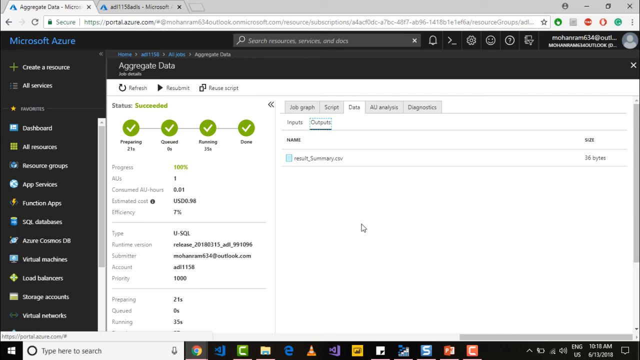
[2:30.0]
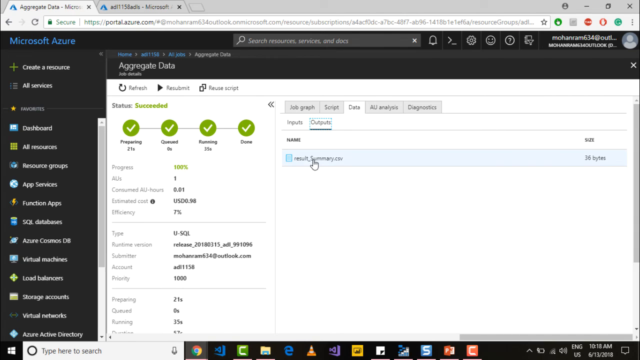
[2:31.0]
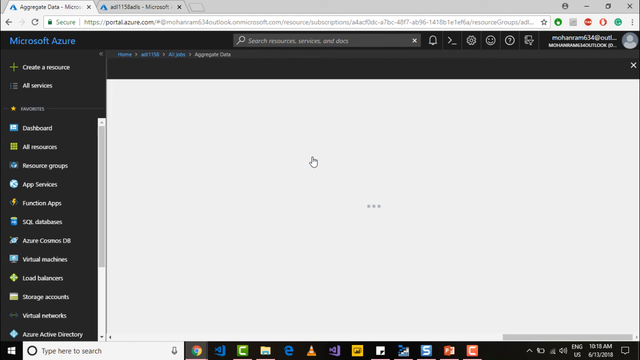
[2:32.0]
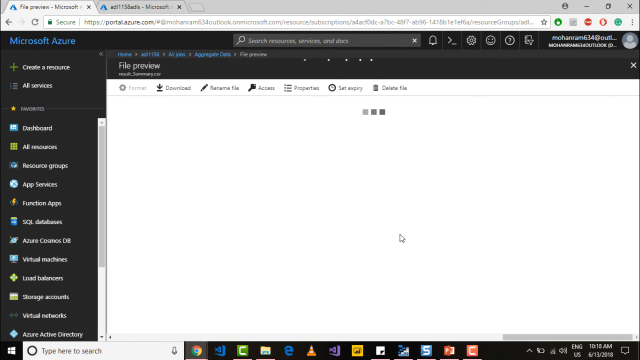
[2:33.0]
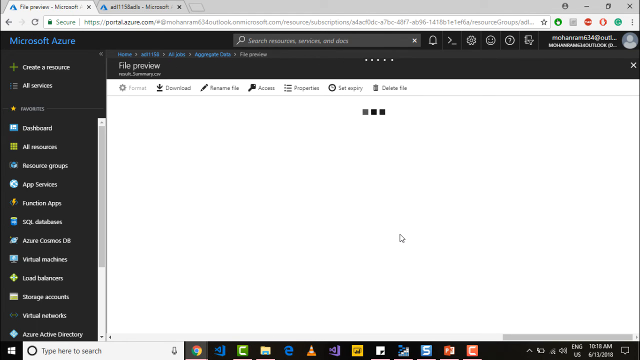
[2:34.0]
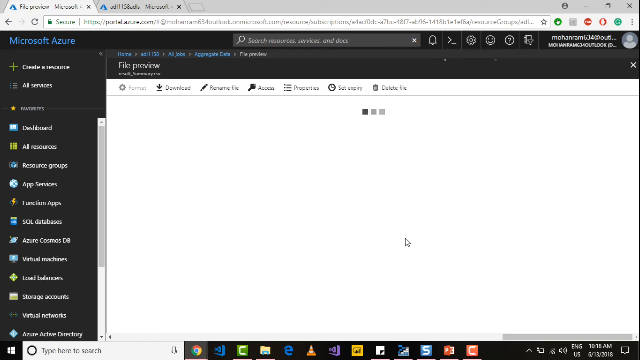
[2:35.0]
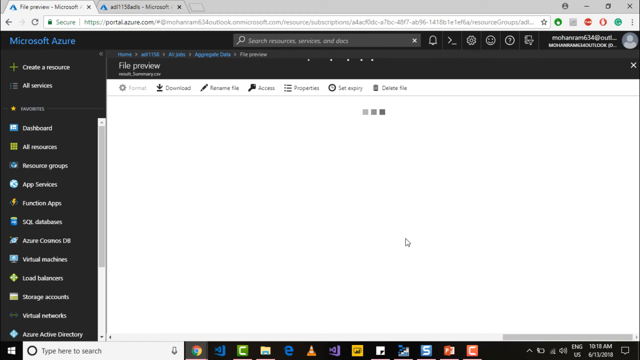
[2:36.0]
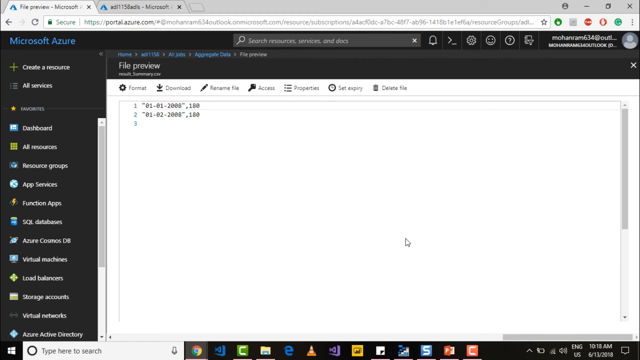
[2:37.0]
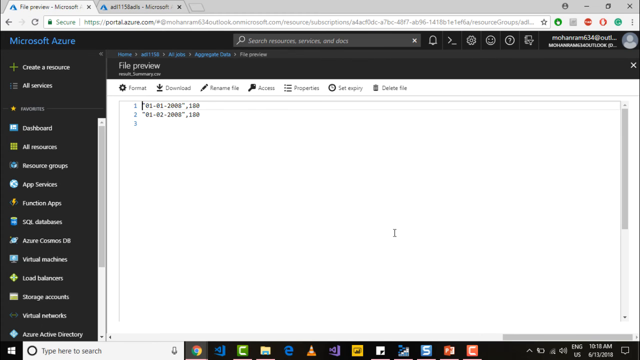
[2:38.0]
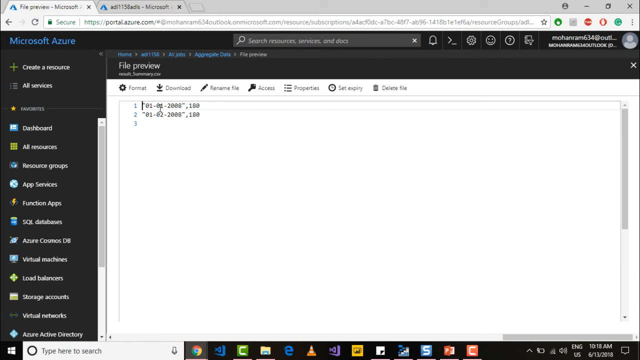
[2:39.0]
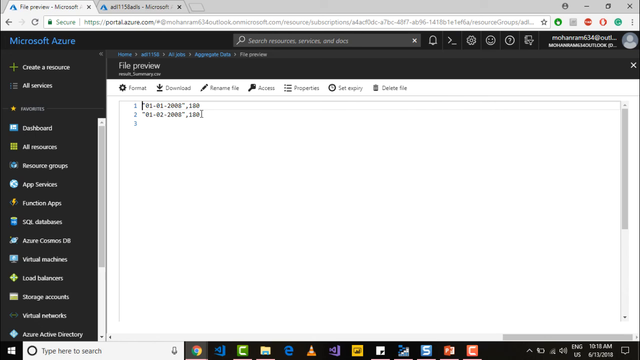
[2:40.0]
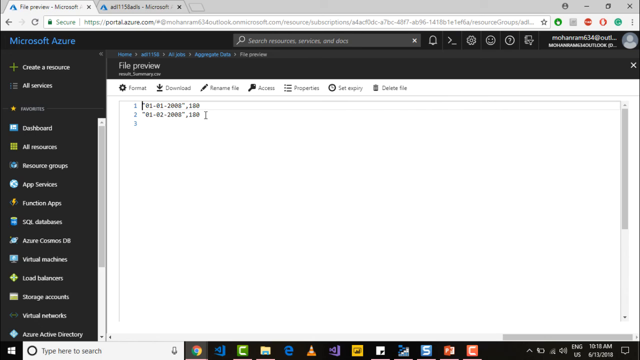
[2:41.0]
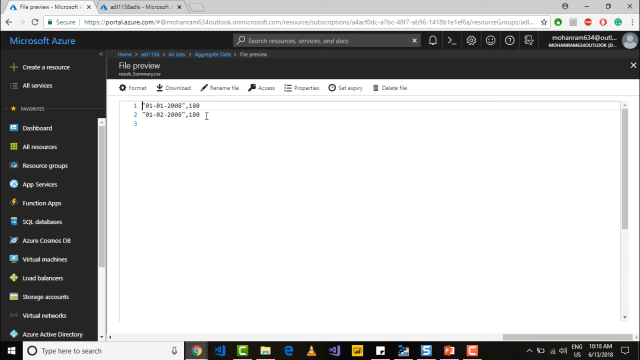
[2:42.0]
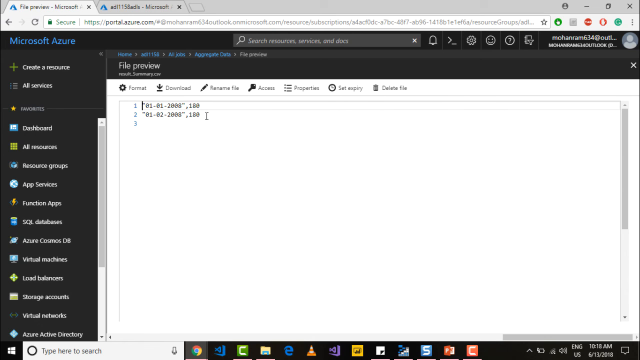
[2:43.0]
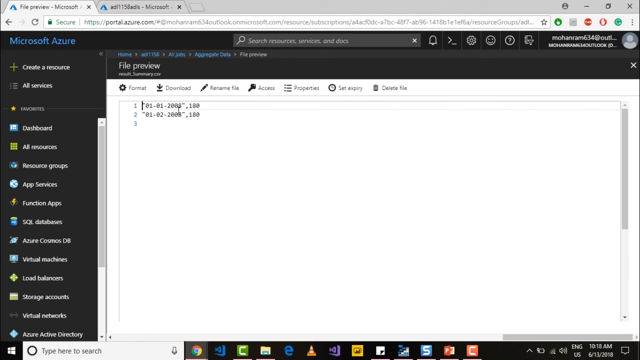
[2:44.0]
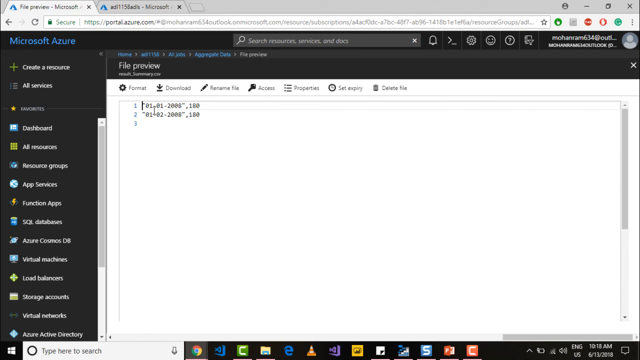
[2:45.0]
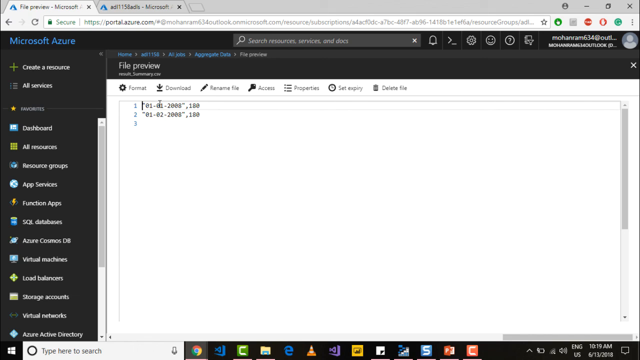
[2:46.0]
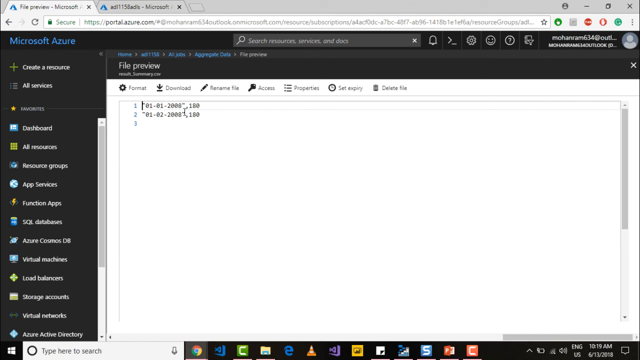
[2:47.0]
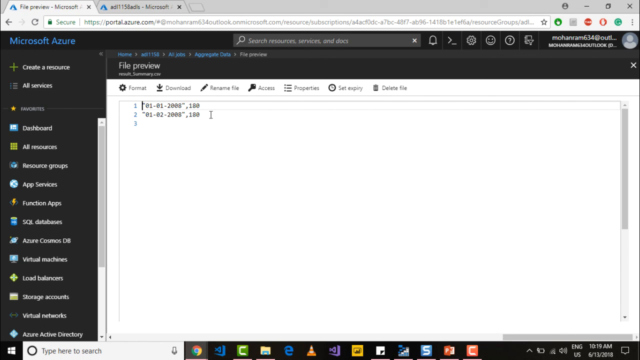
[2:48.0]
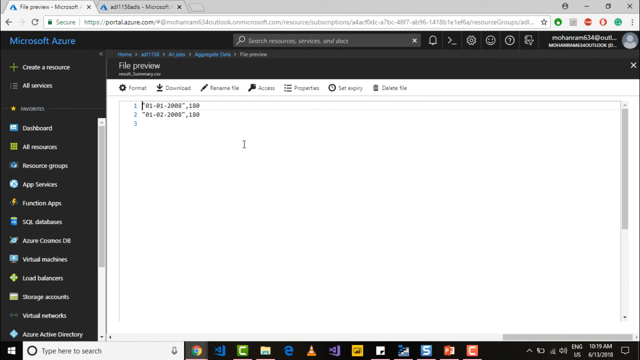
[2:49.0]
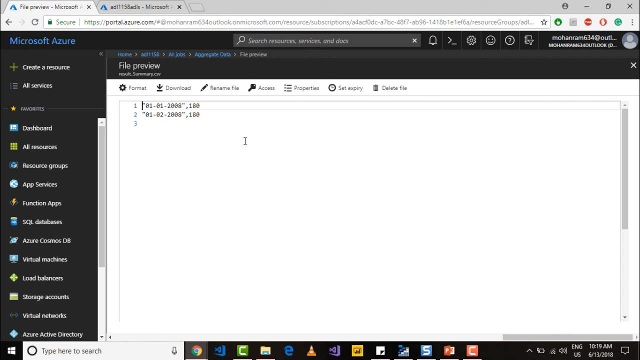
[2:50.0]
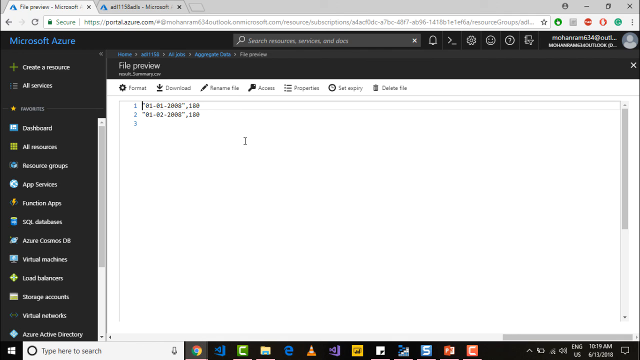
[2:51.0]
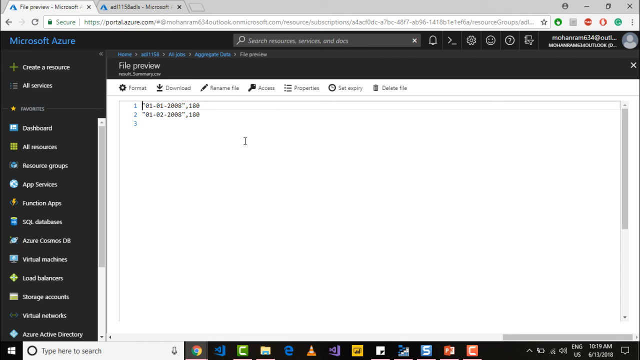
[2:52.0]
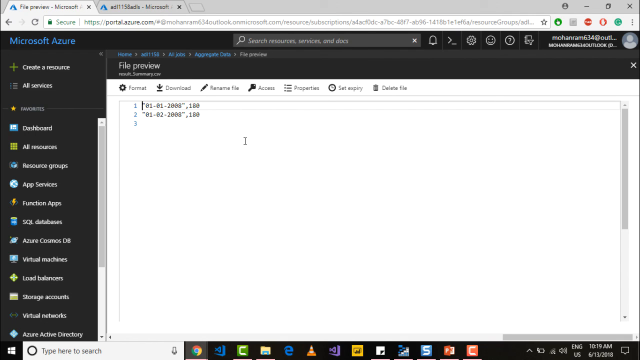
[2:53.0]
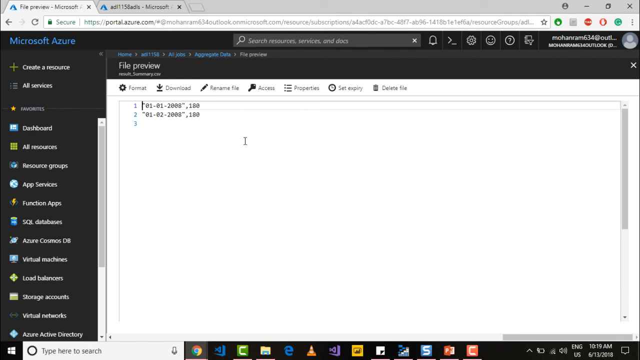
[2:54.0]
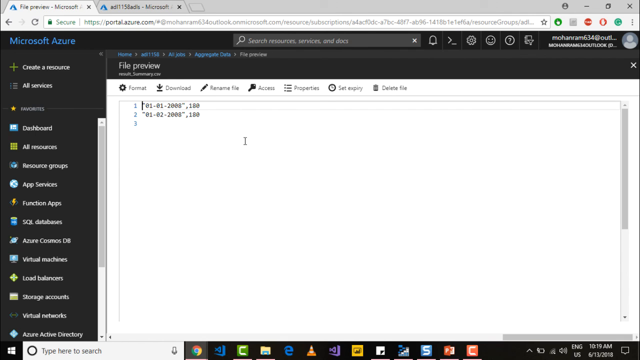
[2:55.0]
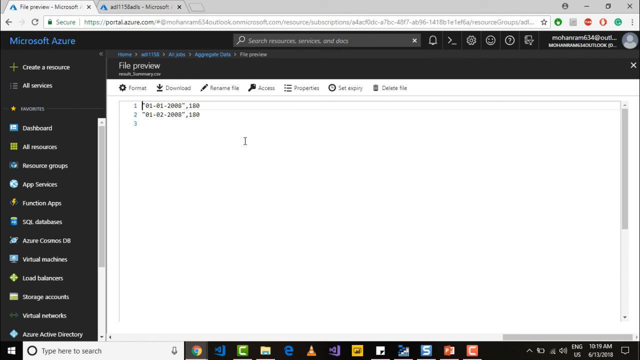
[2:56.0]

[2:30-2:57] A computer screen shows Microsoft Azure in the upper left corner along with the menu choices, all against a solid black background, with blue, red and purple text. Below the words "data explorer," "open file" and "save as," a light blue banner reads "information" with an "i" inside a blue circle, and to the right reads "submitting job aggregate data." A slider appears at the top of the screen. A quick-moving mouse jumps to a new page called "status successful," and the mouse moves around as it completes a task or job. The slider reads "AUS." The next page has a "status succeeded" note in the upper left, and the mouse then apparently does a submit as the whole page suddenly disappears. There are slider bars at the bottom and on the right and left sides of the open white page. Next, a page with script opens, with script on lines 1 and 2, and the mouse flutters around both lines.